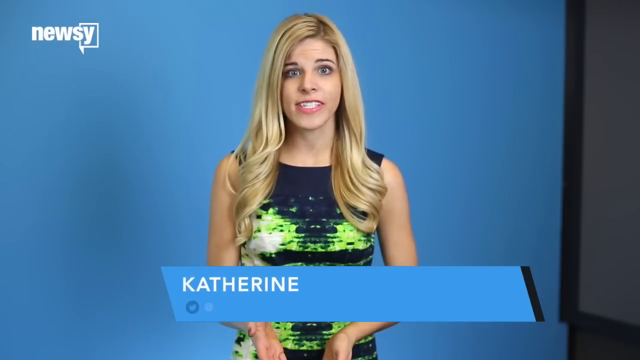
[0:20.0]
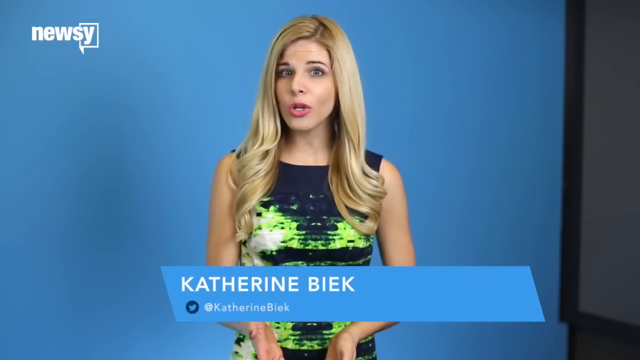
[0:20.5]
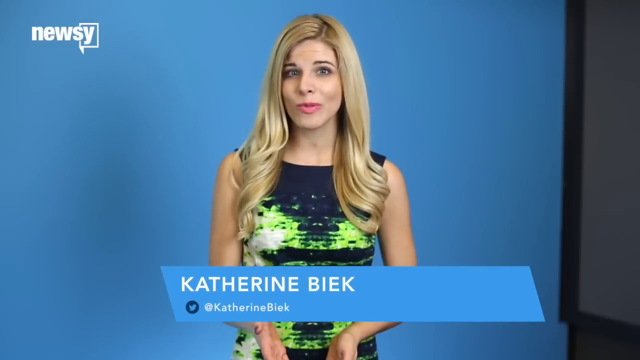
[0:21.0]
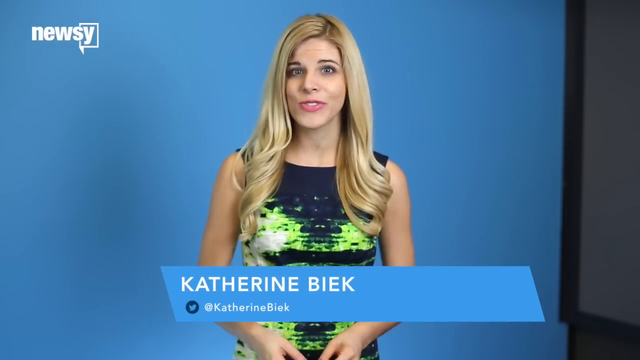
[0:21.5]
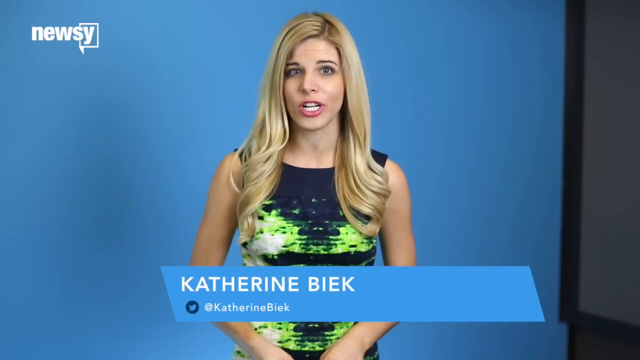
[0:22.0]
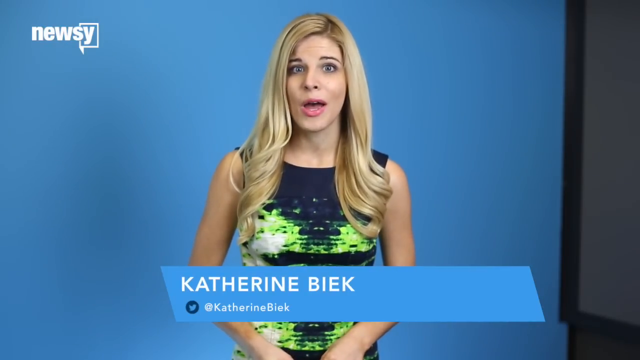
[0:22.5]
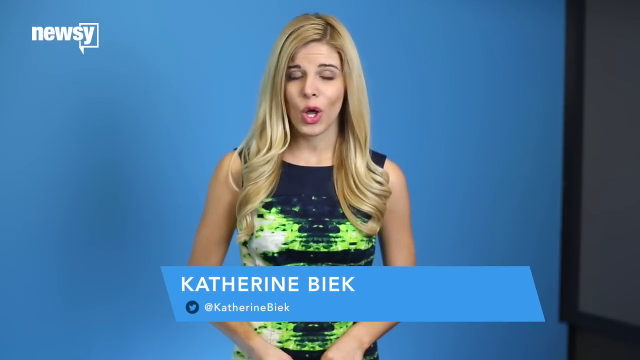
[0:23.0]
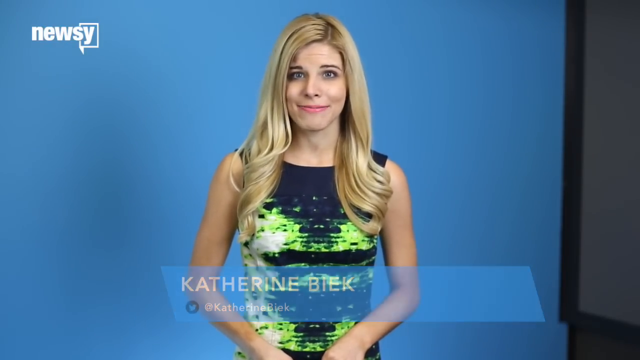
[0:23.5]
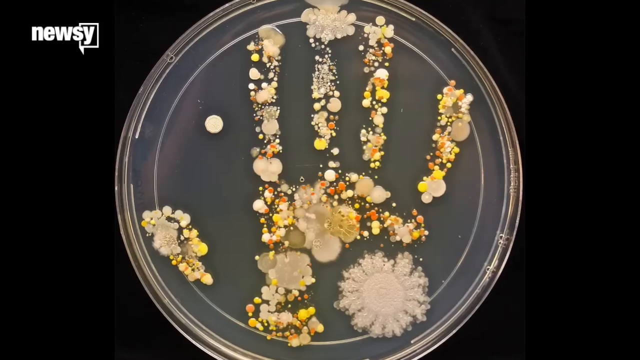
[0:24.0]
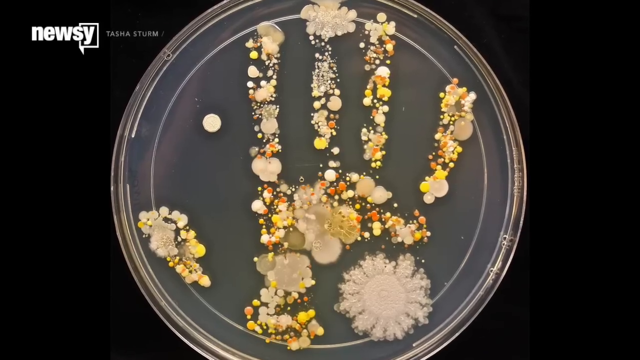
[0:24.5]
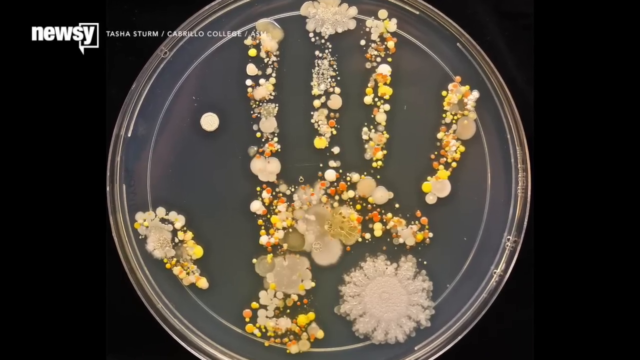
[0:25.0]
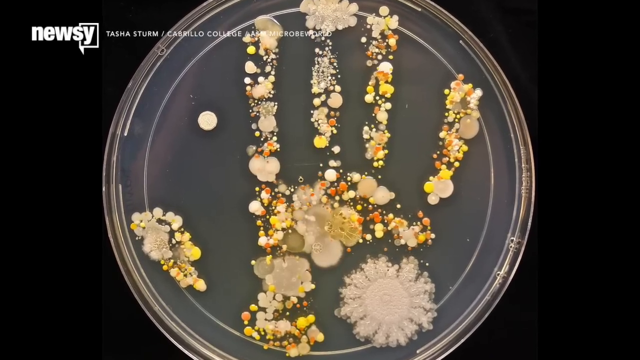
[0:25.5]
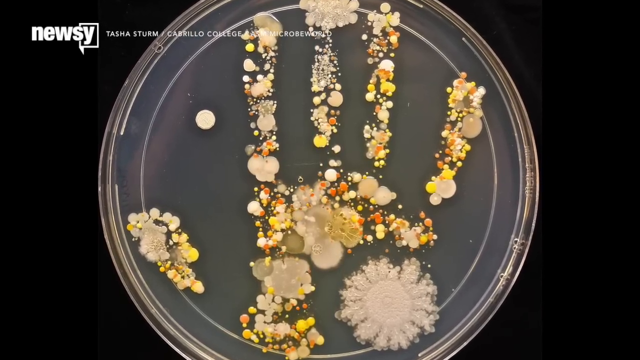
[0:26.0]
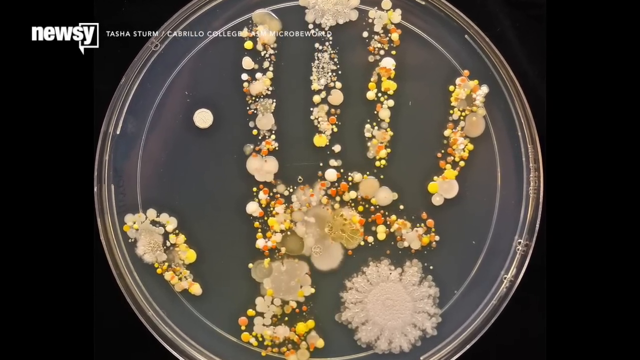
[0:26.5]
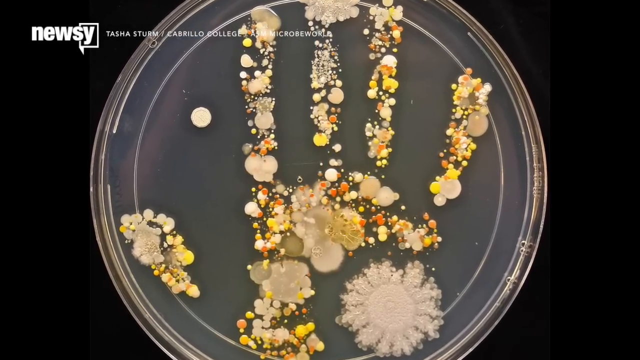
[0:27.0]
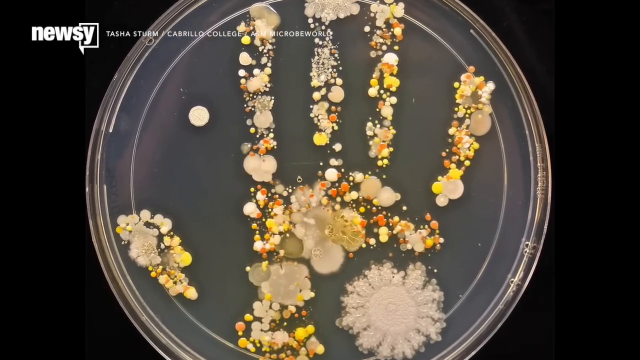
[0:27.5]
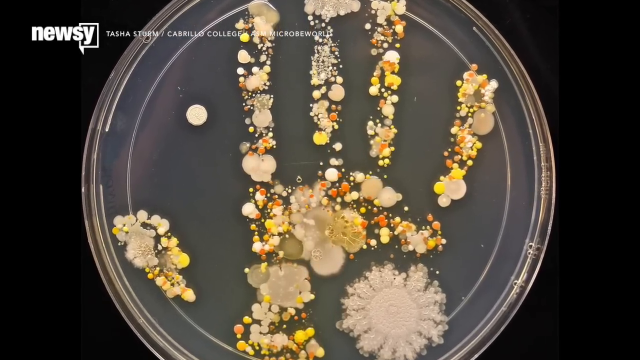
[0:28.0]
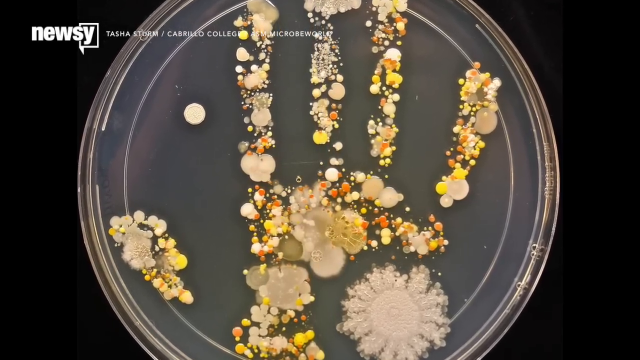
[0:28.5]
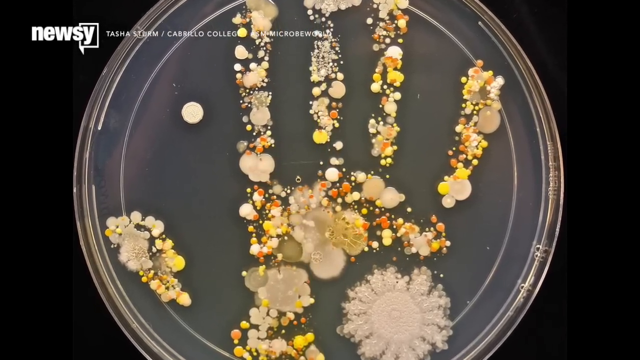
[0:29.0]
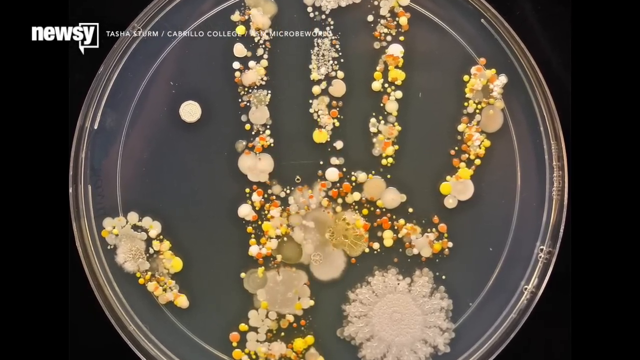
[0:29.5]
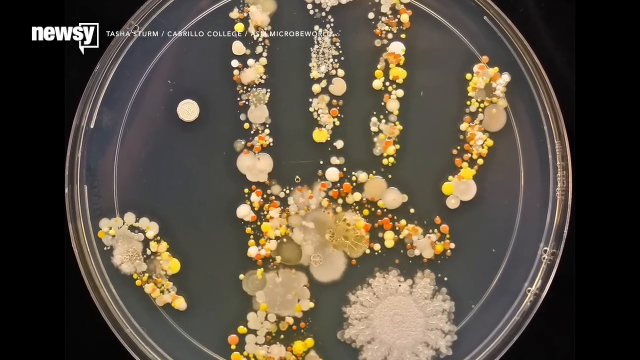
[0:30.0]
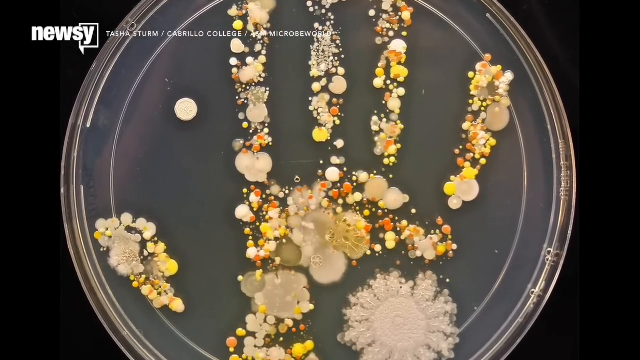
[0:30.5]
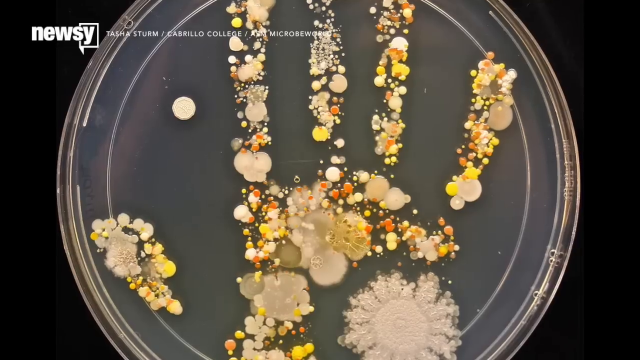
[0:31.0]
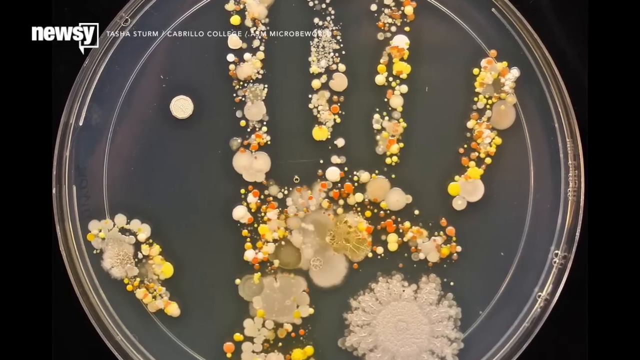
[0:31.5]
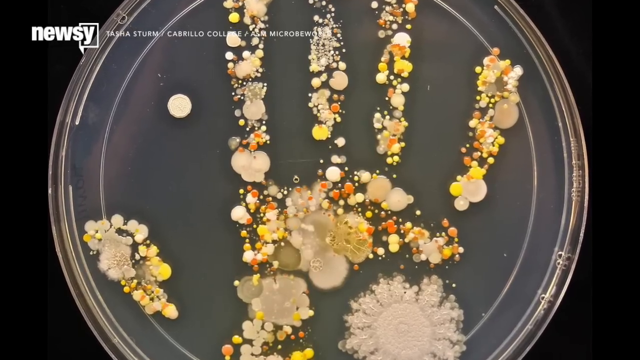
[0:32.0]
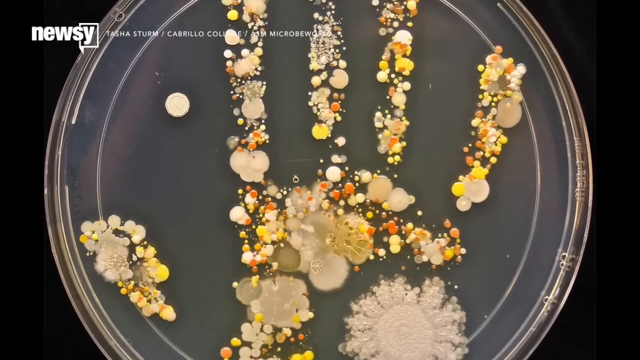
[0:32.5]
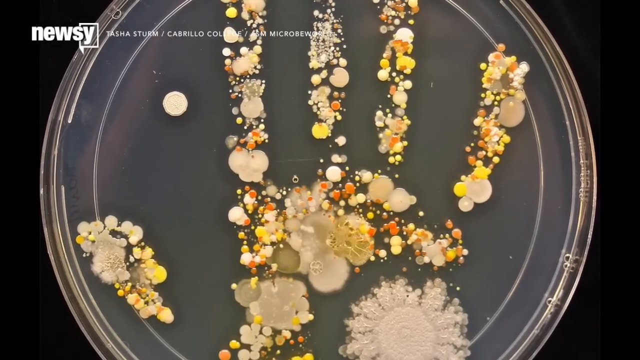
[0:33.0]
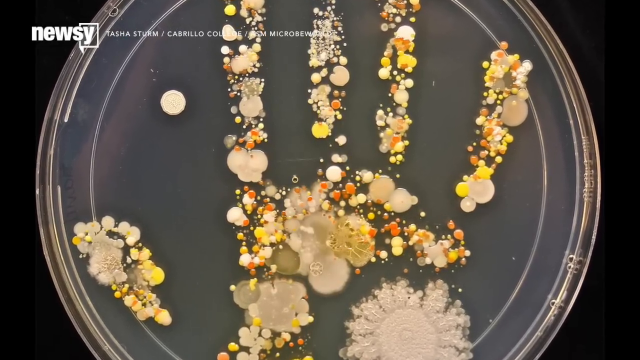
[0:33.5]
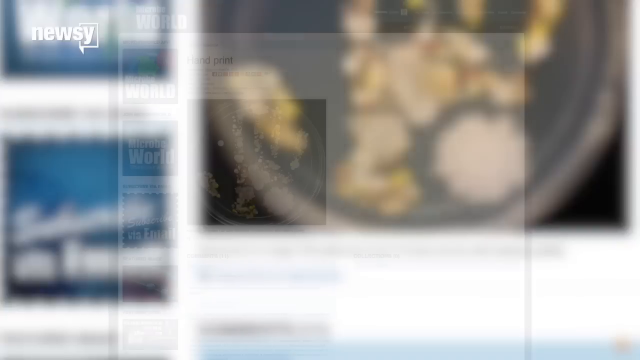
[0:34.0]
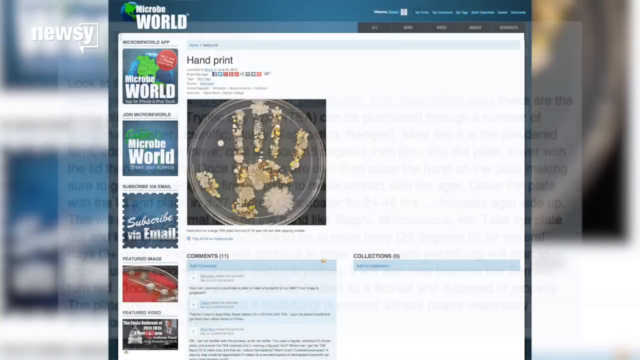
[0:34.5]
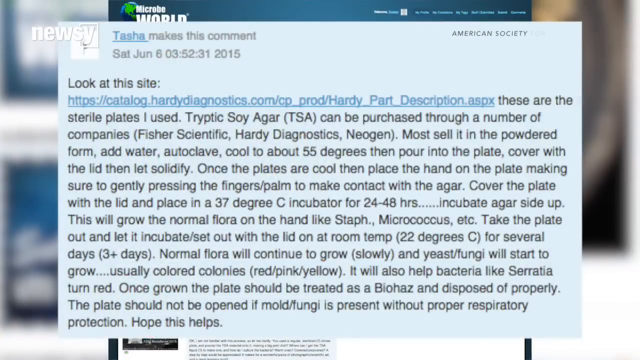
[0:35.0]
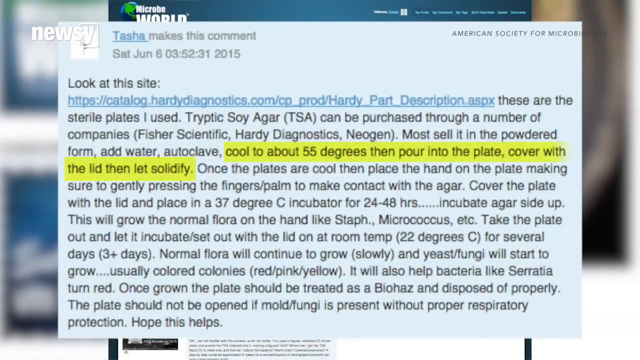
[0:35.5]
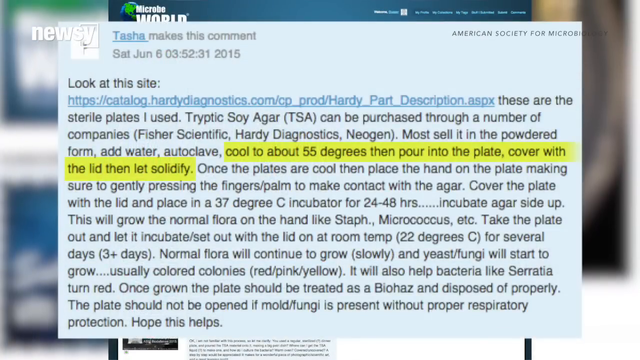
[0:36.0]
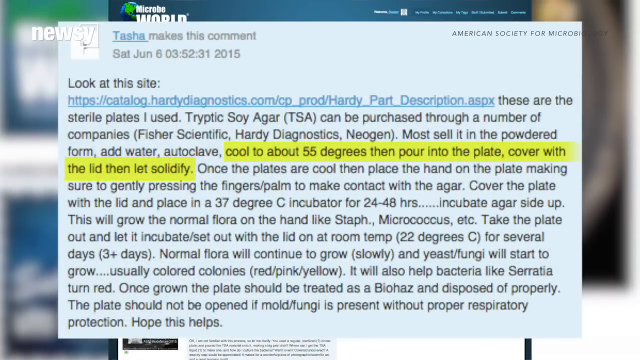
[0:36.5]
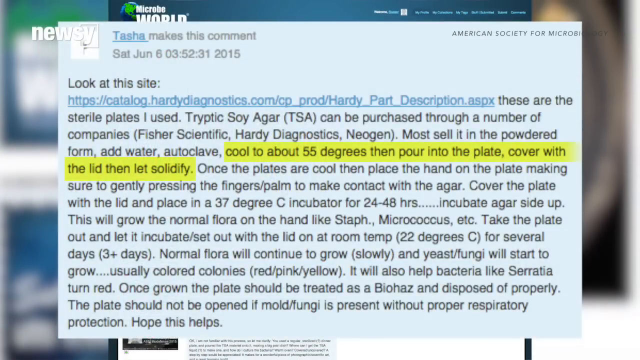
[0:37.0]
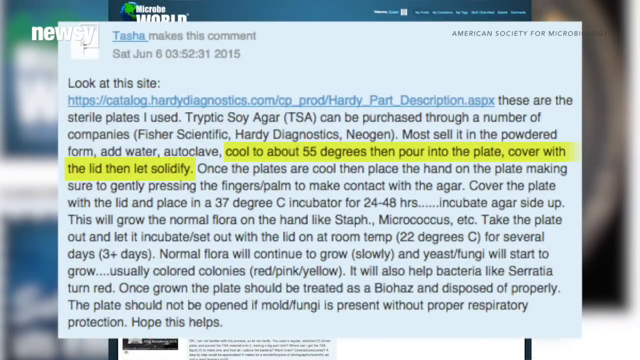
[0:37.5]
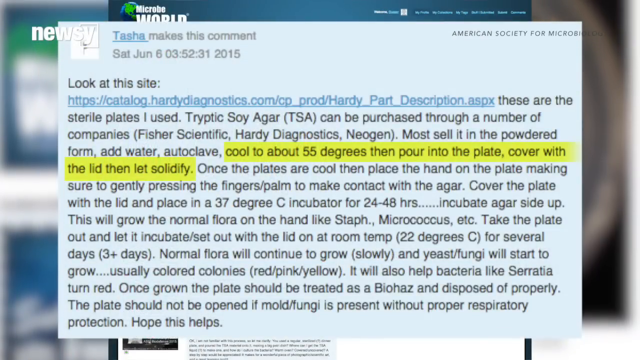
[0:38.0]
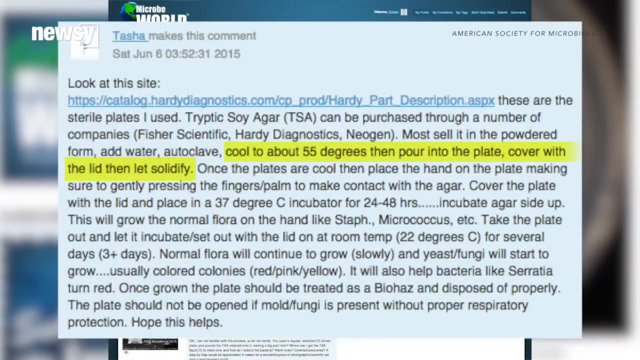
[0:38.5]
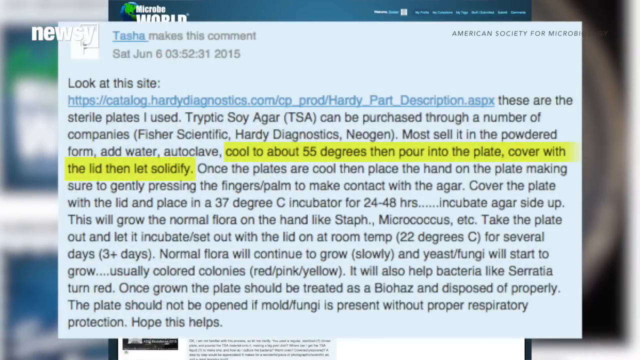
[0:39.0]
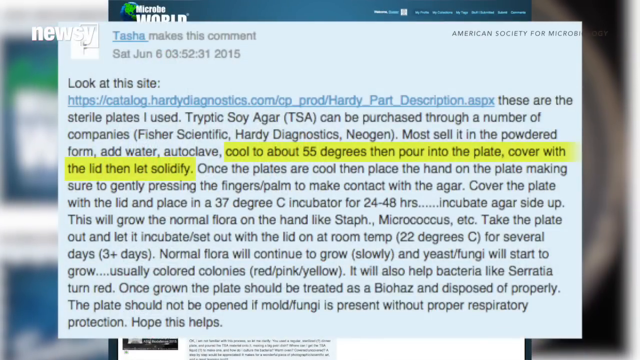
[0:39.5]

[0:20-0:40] Newsy presenter Katherine Biek, who has blonde hair and wears a navy blue and lime green shift dress, talks to the camera with a smile in front of a blue background. A close-up follows of a Petri dish with a handprint formed out of spores or mould in yellow, green, grey and white. Next comes a detailed information page, a comment from Tasha, about how to make these handprints and where sterile plates using tryptic soy agar can be purchased. It gives instructions to gently press the fingers and palm to make contact with the agar, cover the plate with the lid and place it in a 37 degree incubator for 24 to 48 hours, which grows the normal flora on the hand such as staph and micrococcus. The plate is then left to incubate with the lid on at a room temperature of 22 degrees for several days, where the normal flora continue to grow slowly and yeast and fungi start to grow, usually as coloured colonies of red, pink and yellow, and bacteria like serratia turn red. Once grown, the plate should be treated as a biohazard and disposed of properly, and it should not be opened with mould or fungi present without proper respiratory protection.